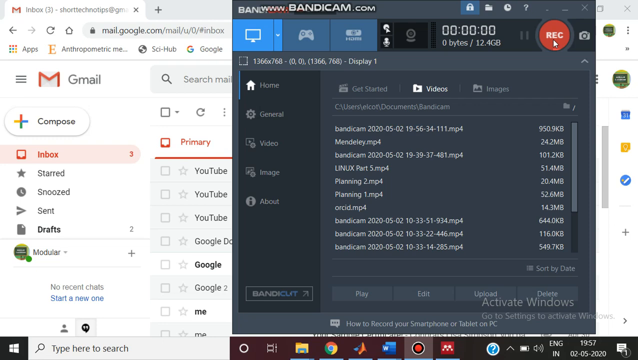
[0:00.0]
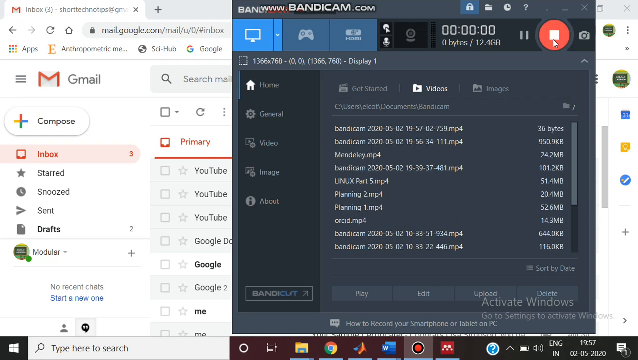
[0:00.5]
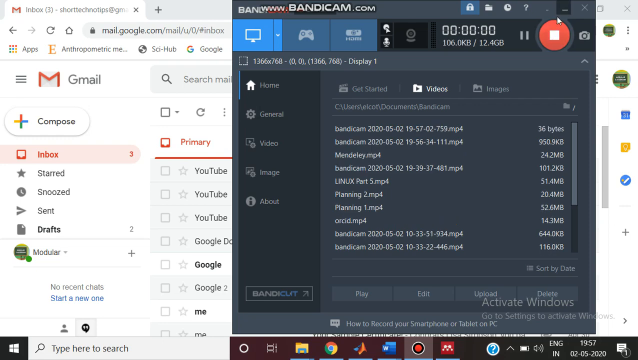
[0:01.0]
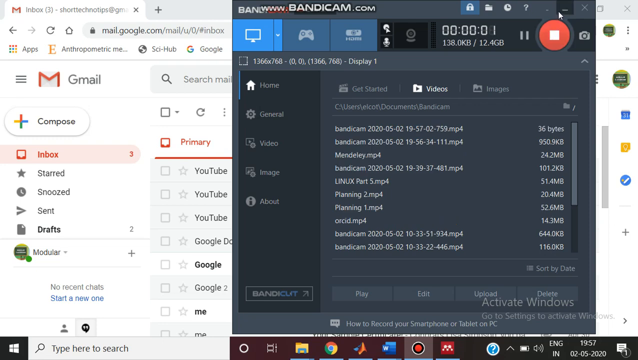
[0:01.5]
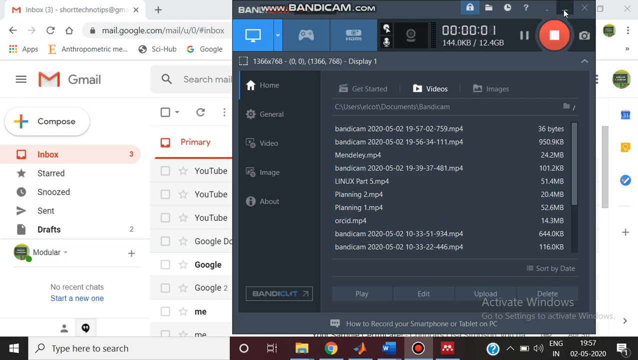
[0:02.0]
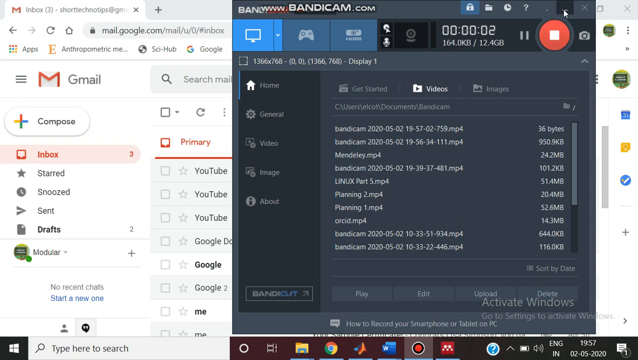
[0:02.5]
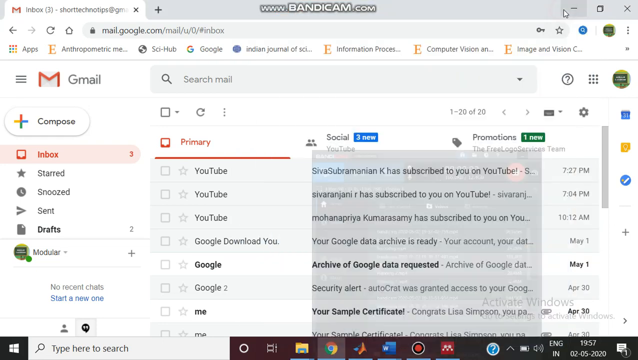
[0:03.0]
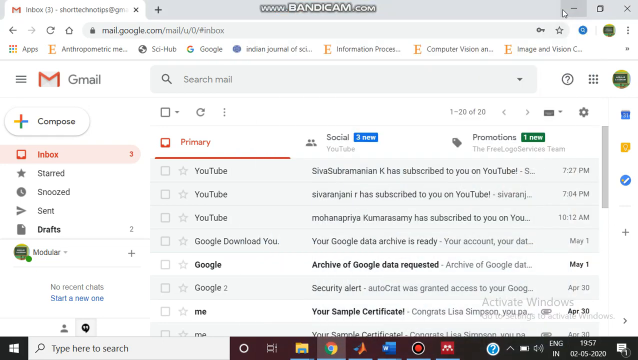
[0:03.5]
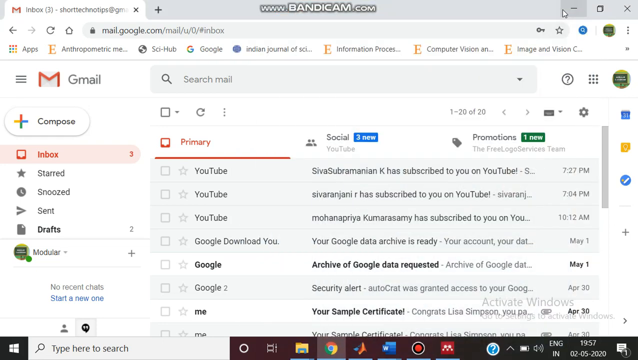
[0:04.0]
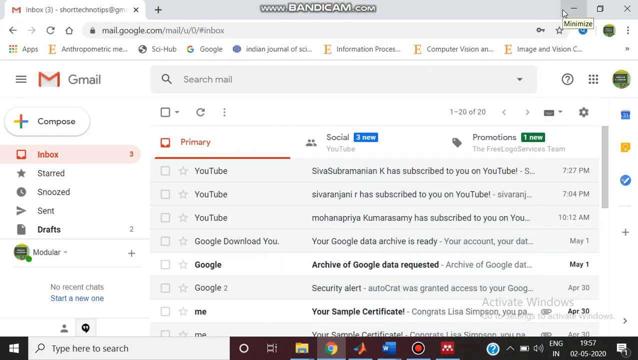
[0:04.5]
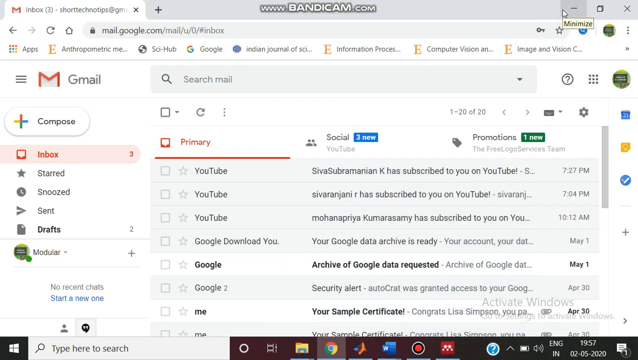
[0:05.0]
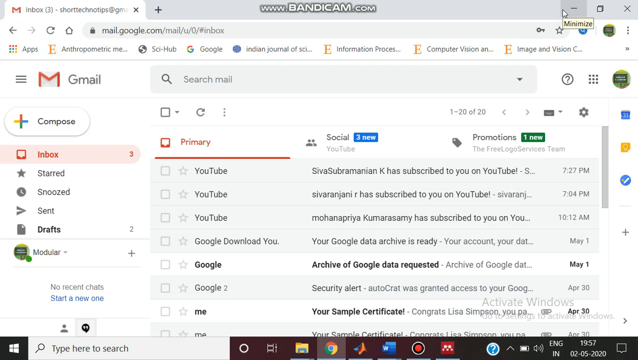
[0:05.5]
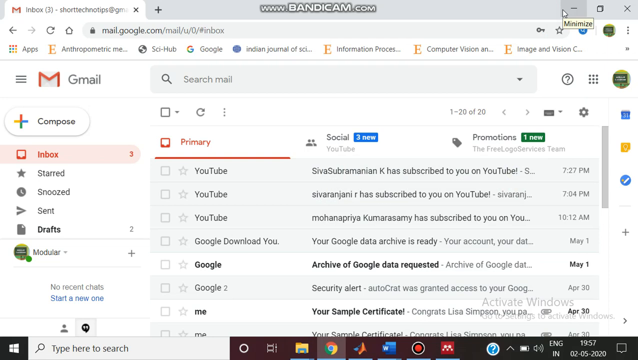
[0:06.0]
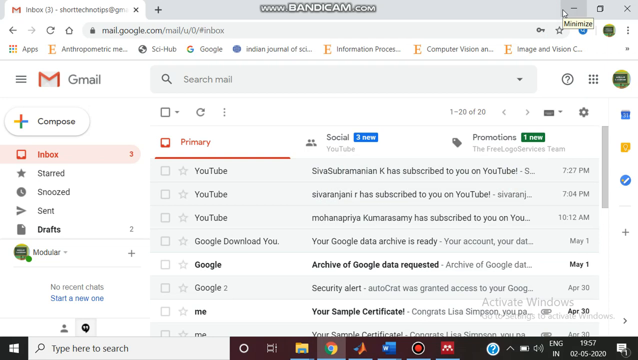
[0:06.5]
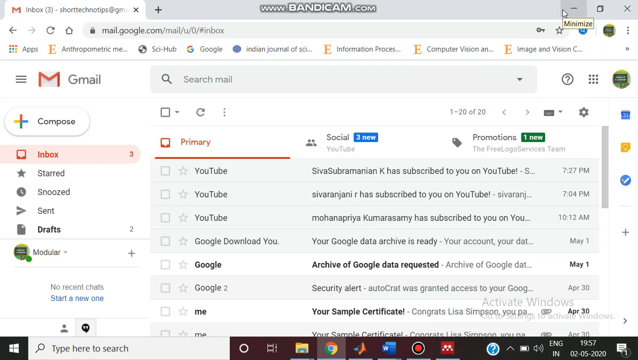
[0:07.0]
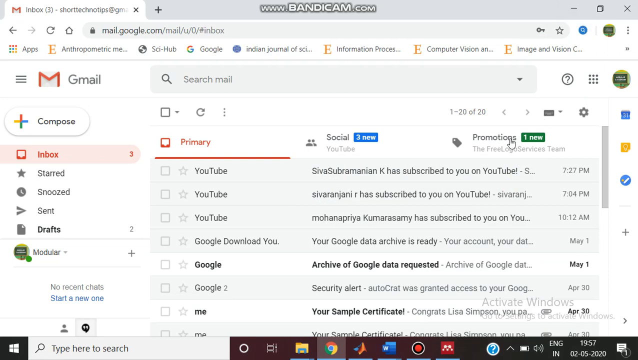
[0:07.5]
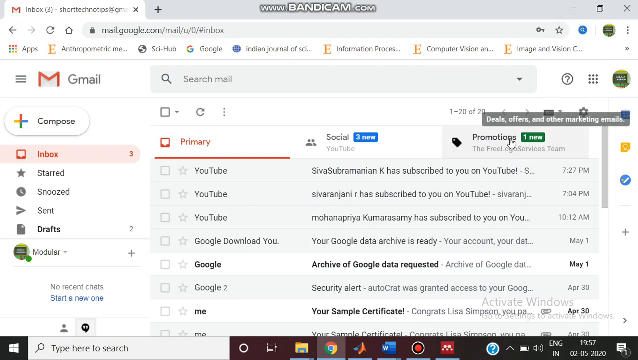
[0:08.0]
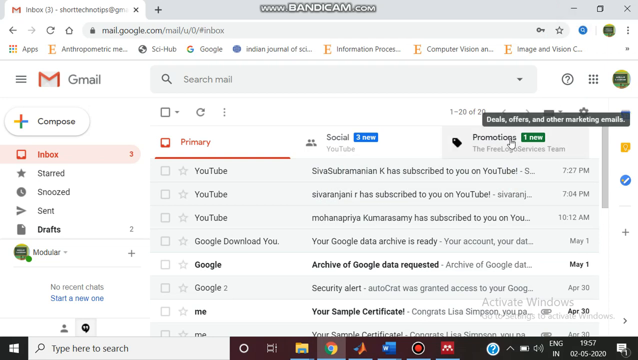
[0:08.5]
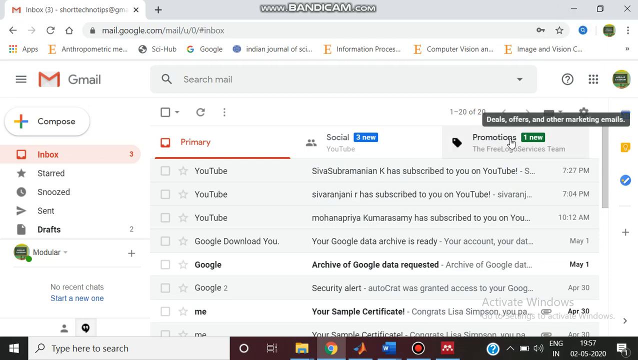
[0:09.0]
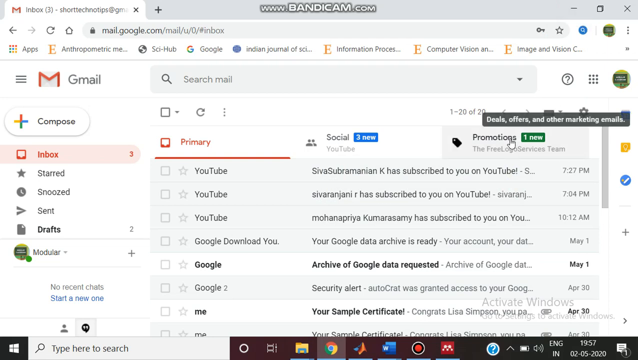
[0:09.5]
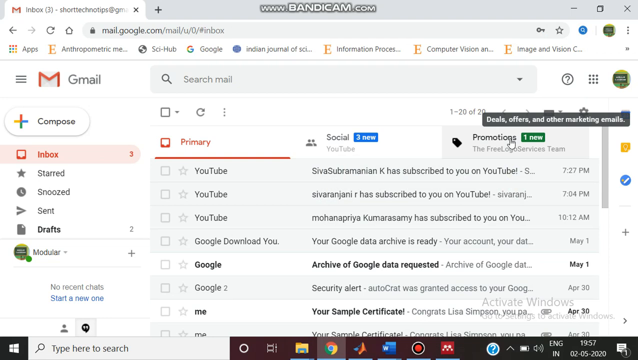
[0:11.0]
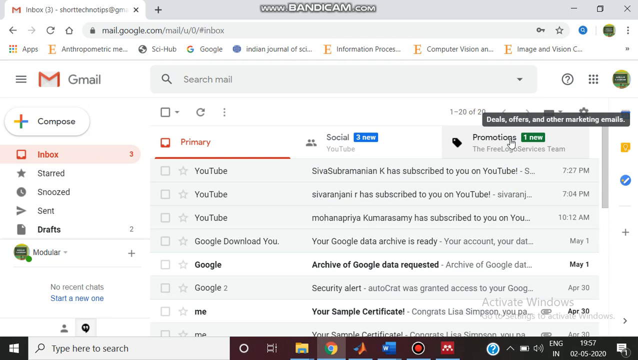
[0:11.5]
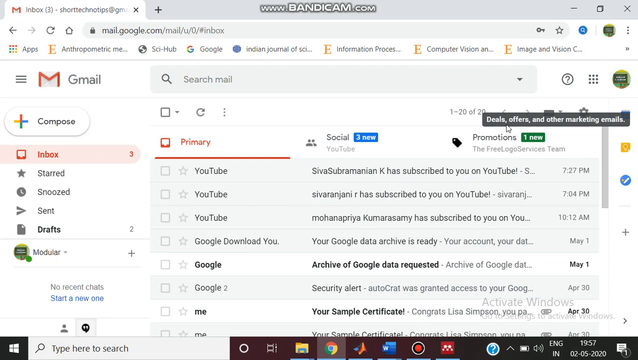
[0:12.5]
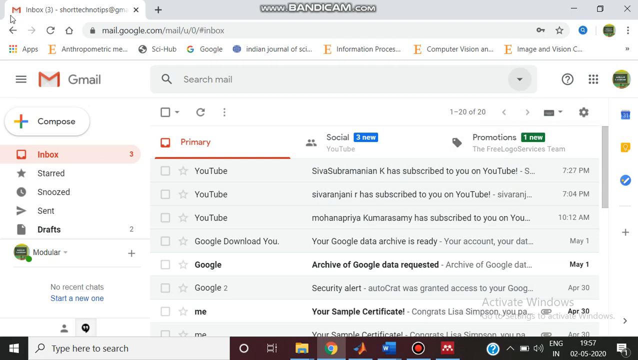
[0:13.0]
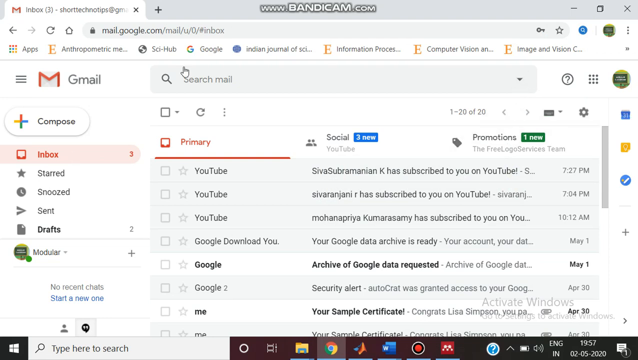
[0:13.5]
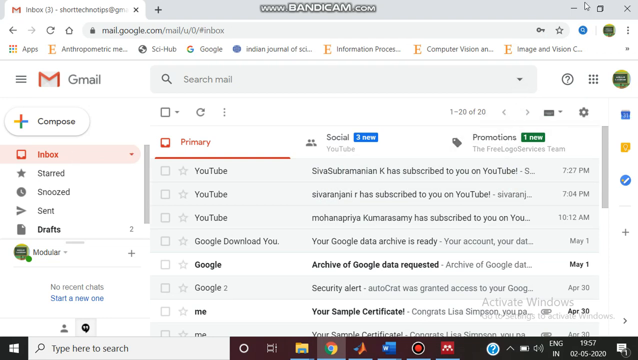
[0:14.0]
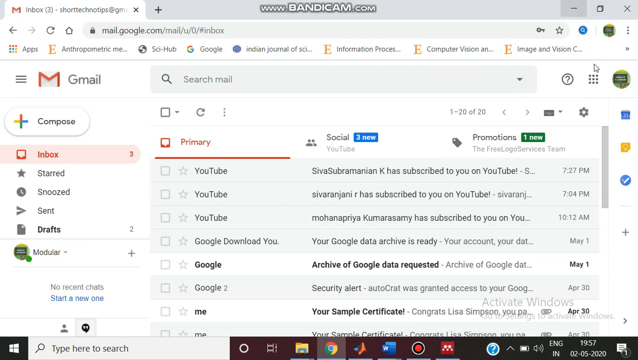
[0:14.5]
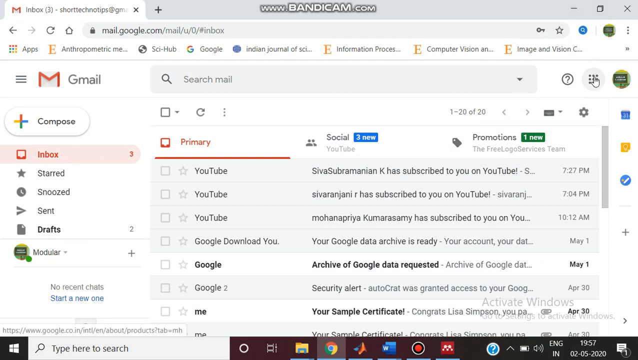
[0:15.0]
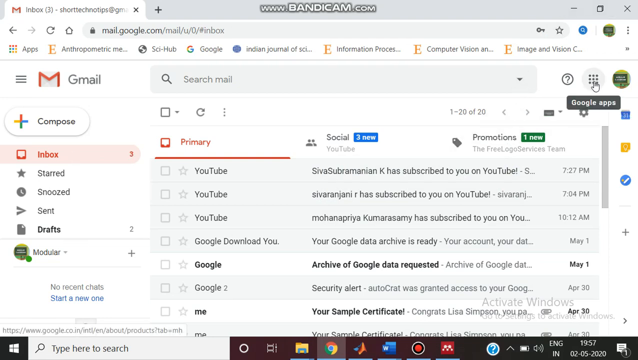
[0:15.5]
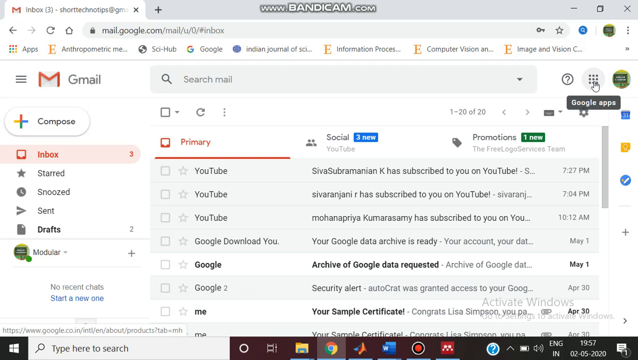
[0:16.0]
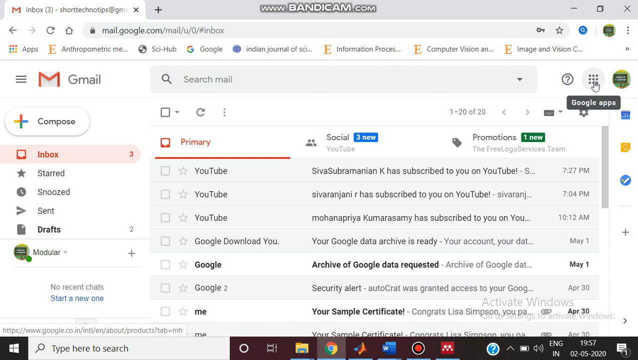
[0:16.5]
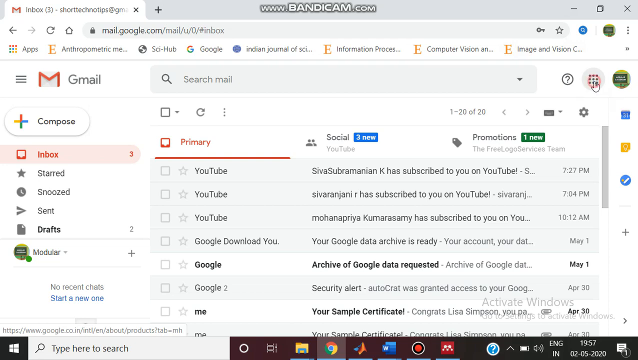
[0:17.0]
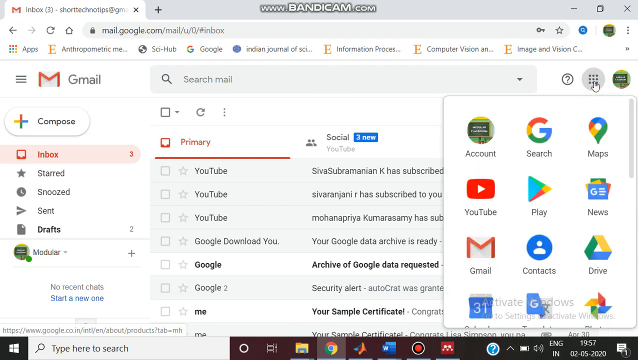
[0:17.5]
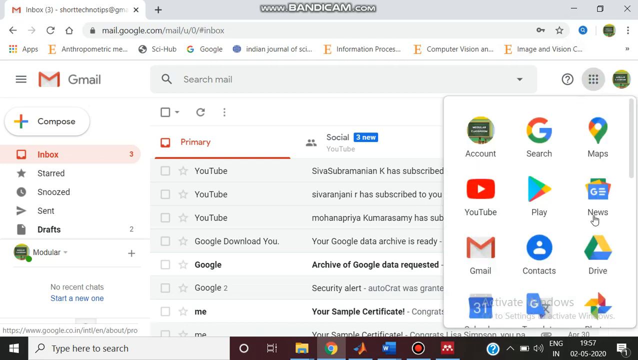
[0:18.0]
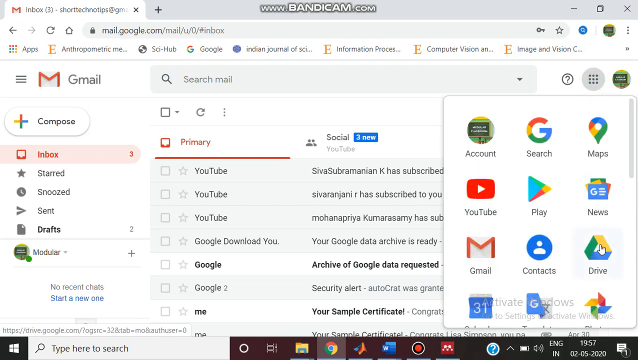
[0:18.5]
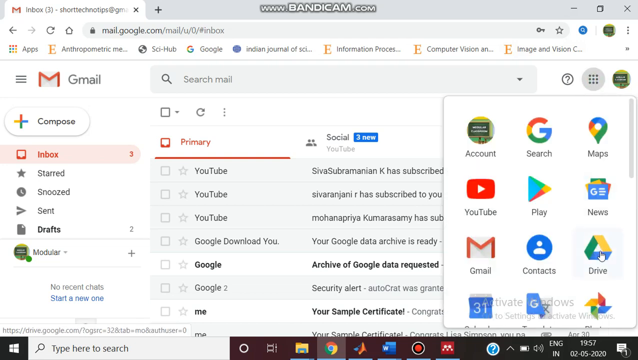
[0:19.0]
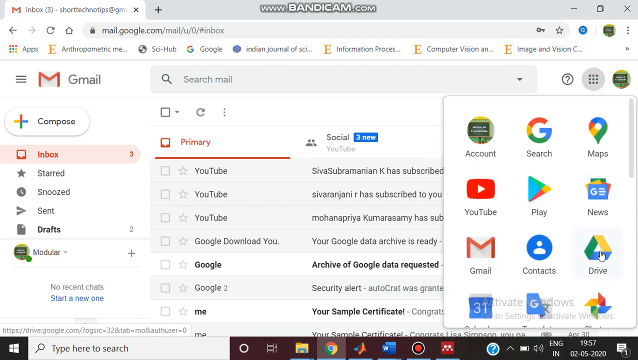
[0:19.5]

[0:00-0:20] The video begins with two images layered on top of each other. The image in the back is a Gmail inbox. Over it is a gray box with shades of gray, white and shades of blue; at its top is the address www.bandicam.com, and there are entries in its body. On its left side are tabs for home, general, video, image and about. The person clicks out of the front box, revealing that the Gmail view is the primary inbox. They click Promotions with the cursor, then Google Apps, and then Google Drive. There is a banner at the bottom of the web page. The Windows logo and a search box are at the bottom right, and the toolbar holds a folder, a Google Chrome shortcut, a Word shortcut, and two more unidentified shortcuts.